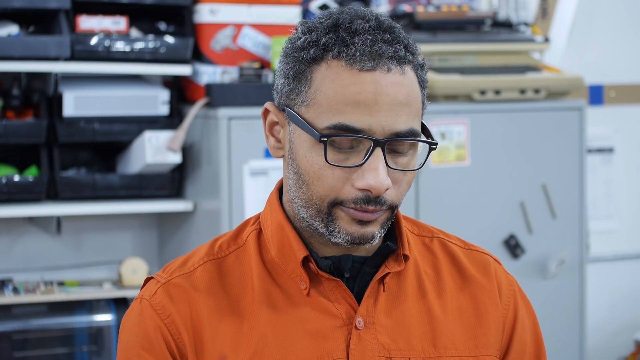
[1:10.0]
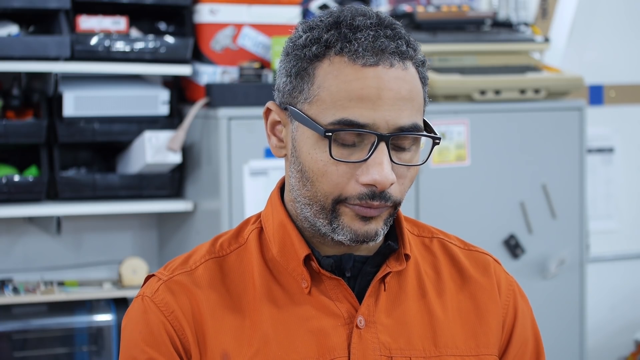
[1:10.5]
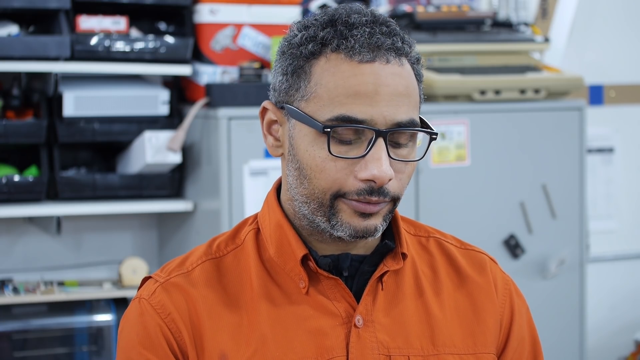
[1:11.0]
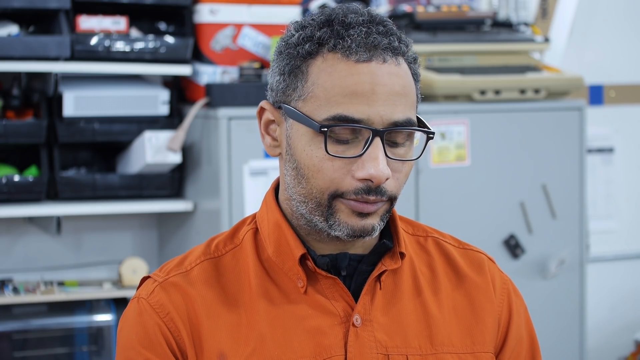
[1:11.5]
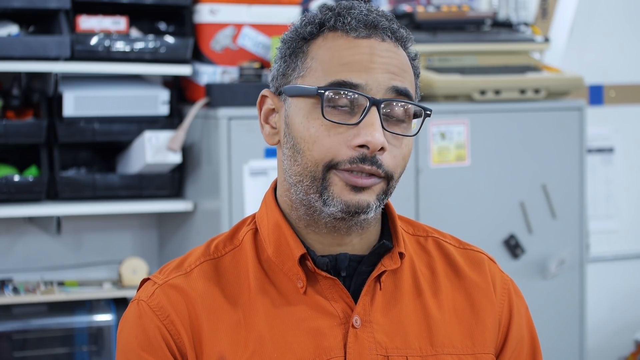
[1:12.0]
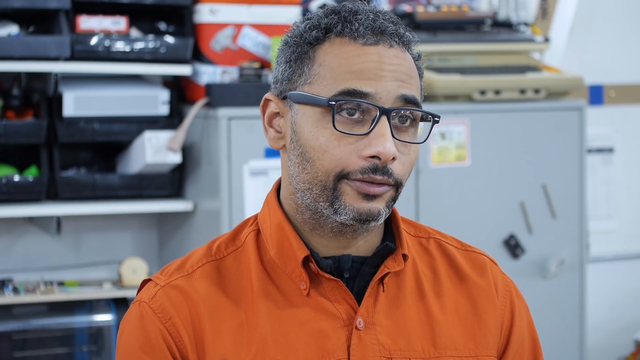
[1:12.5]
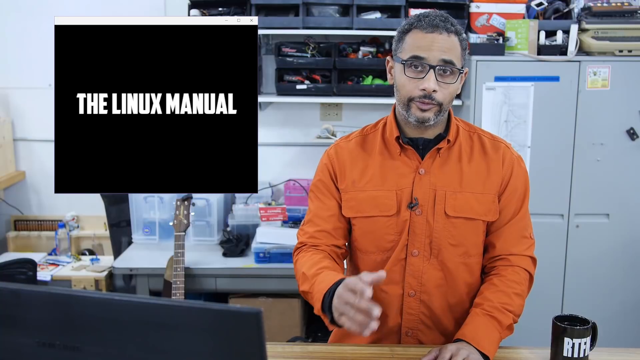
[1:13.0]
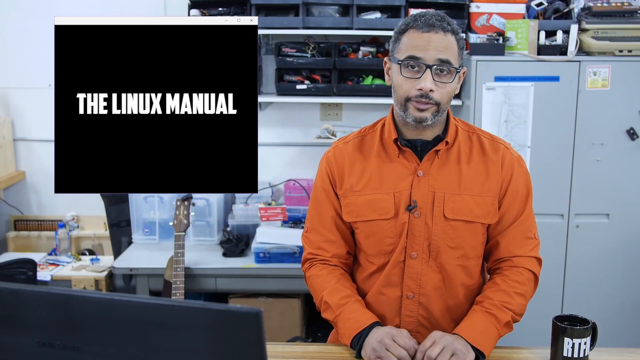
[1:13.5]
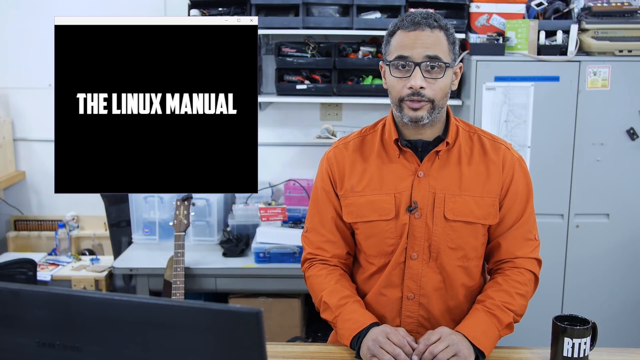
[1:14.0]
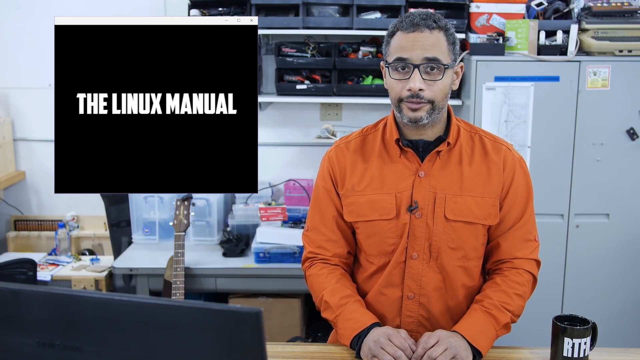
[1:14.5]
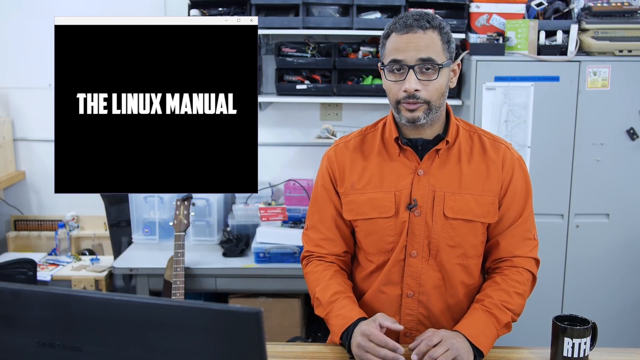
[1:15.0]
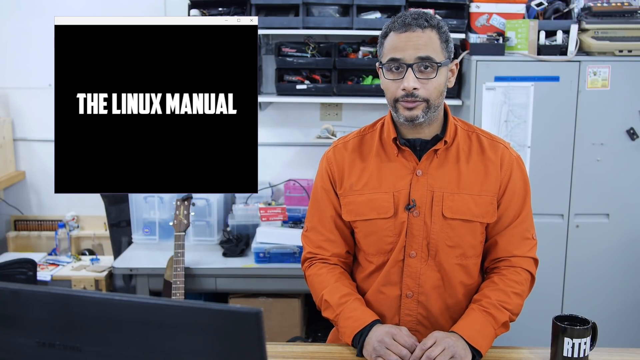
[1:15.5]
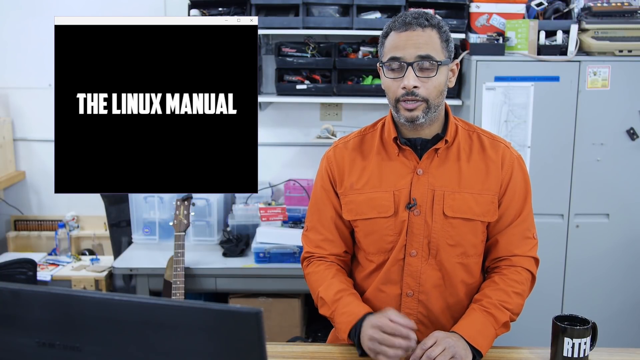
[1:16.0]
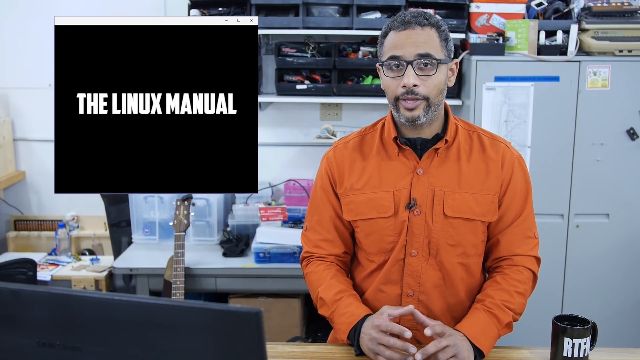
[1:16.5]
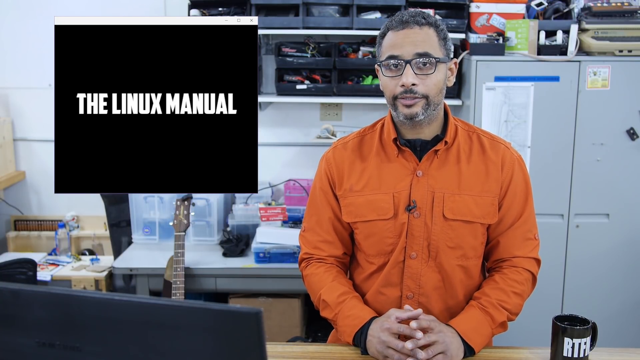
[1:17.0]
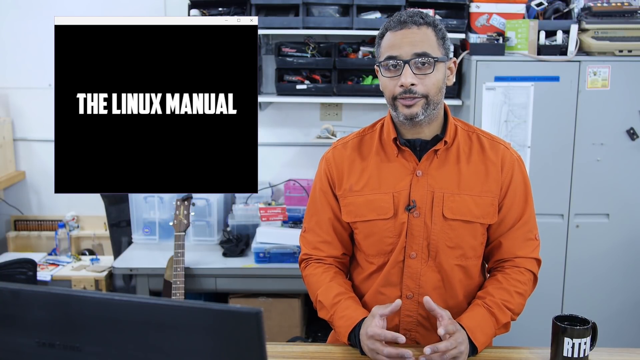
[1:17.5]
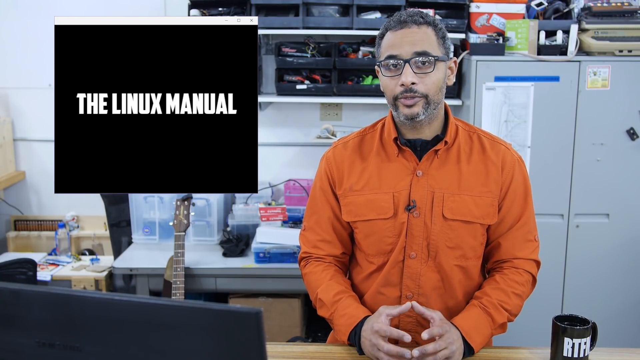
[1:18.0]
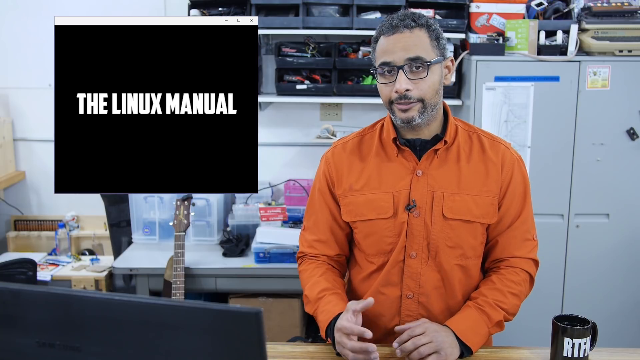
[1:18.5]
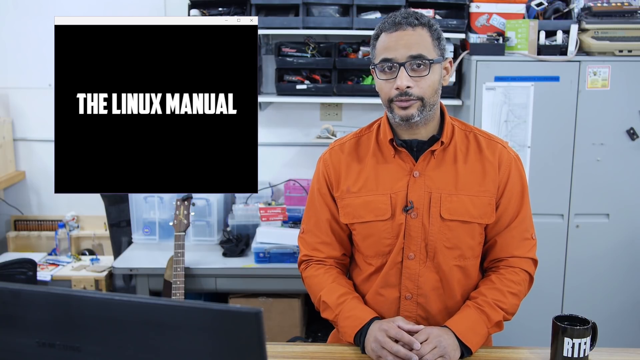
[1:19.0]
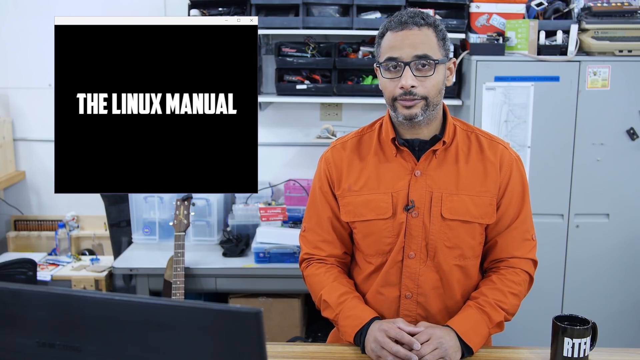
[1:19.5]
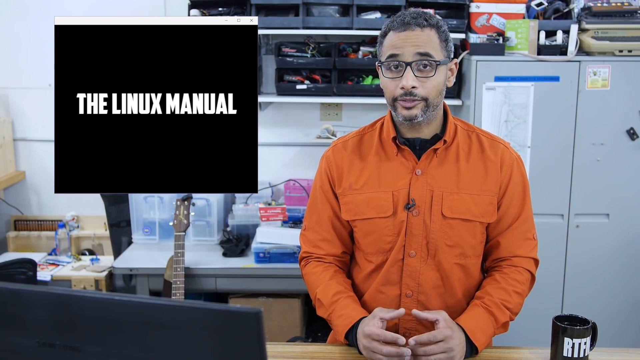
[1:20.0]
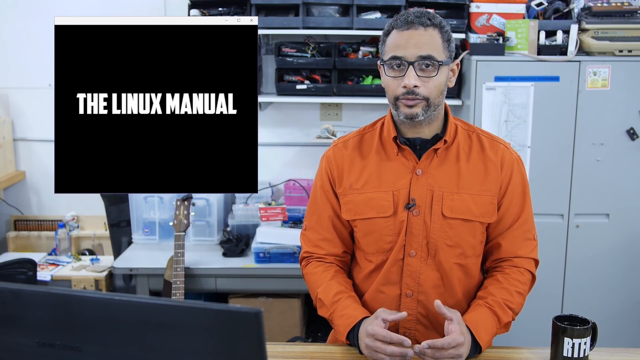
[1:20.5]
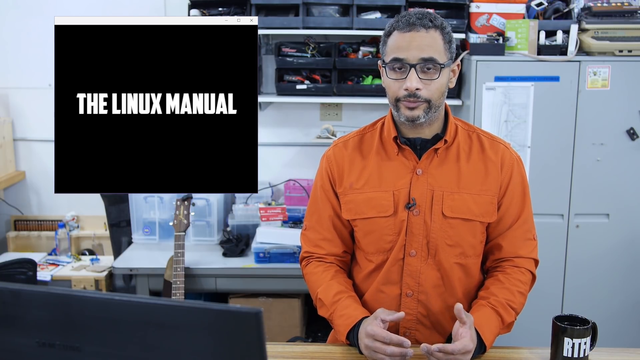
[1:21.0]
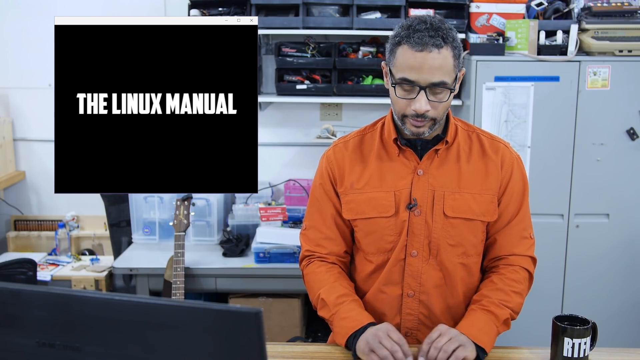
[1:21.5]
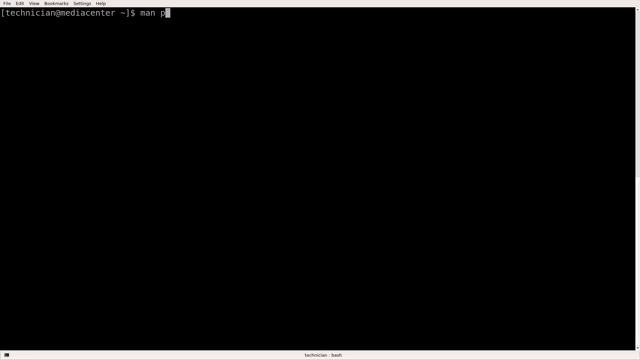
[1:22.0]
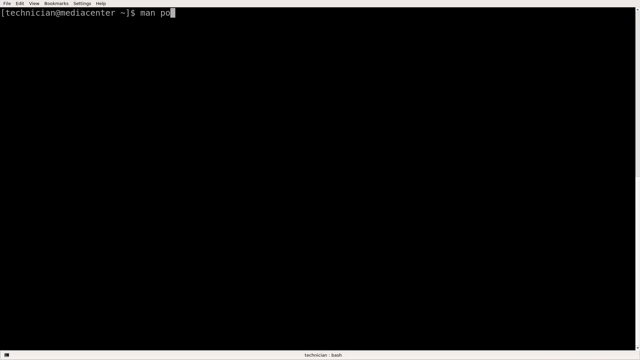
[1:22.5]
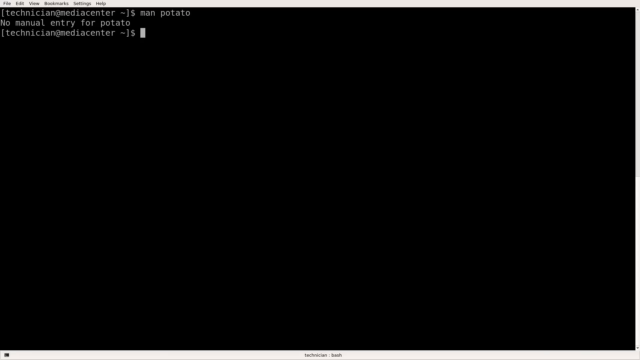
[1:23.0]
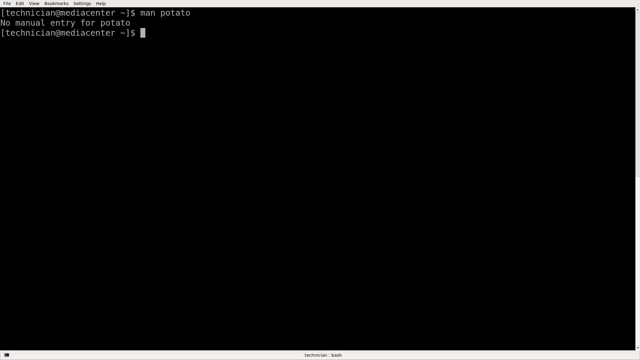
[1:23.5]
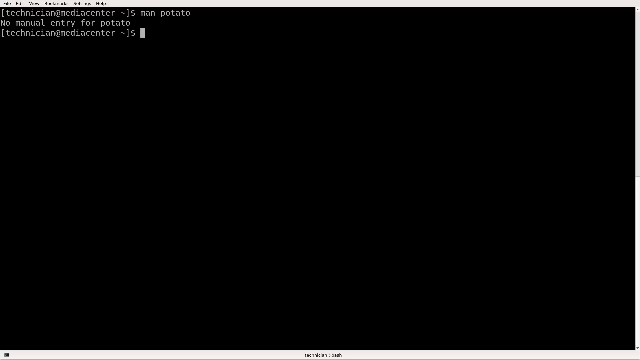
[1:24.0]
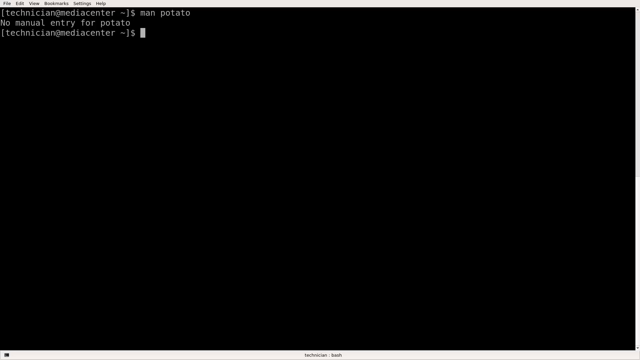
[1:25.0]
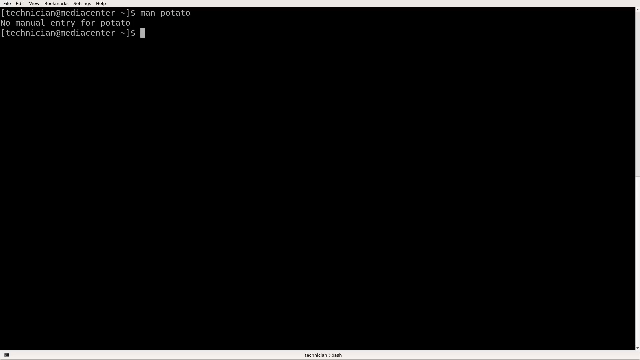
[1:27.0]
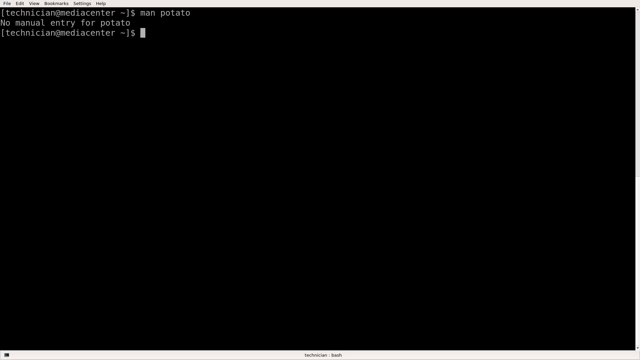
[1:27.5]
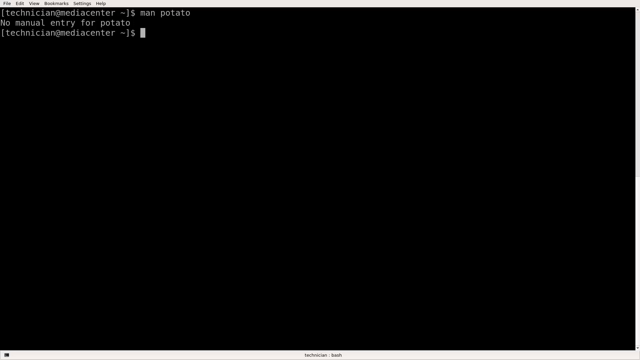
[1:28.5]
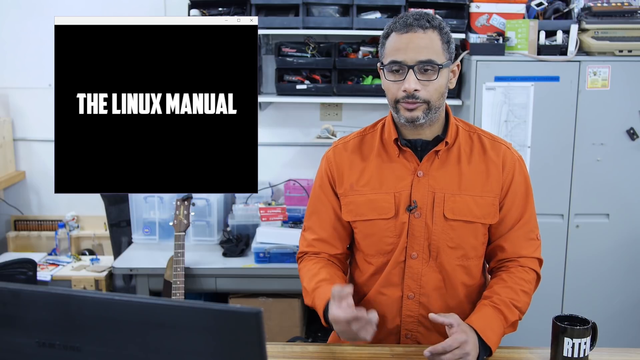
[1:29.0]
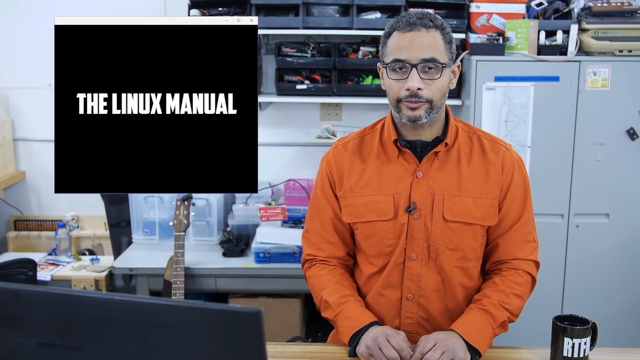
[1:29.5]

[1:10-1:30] The individual, apparently the person giving the tutorial, looks downward at what appears to be his workstation. His shirt button is undone. He is talking and casually motioning slightly with his hands. A window reading "Linux Manual" is right beside him on his right. The room is well lit, with various items that look like devices that cannot be made out, a silver cabinet, and what looks like a coffee mug on the desk. The view pans to the computer's command area, with brief writing at the top. It pans again to the person talking briefly while looking down, apparently to see where he is on the computer, acting like he is explaining something and raising his eyebrows. It pans back to the screen, then back around to the man, who says a few things before looking downward.